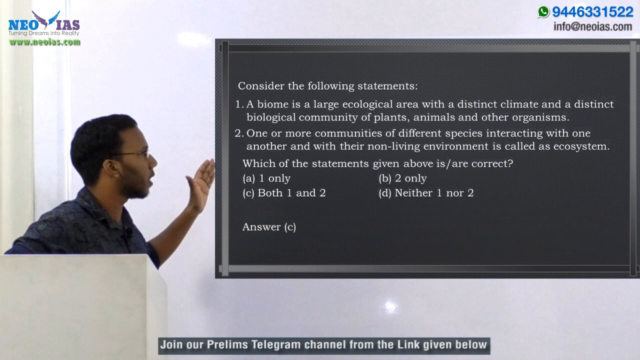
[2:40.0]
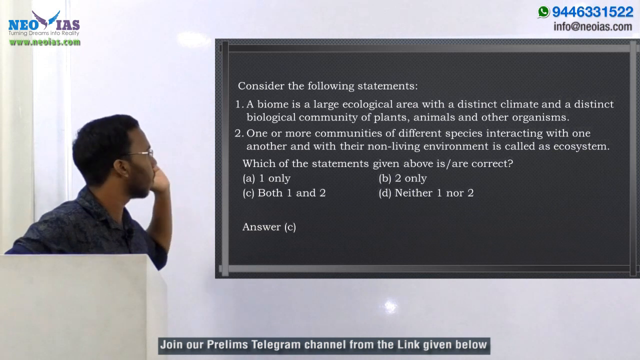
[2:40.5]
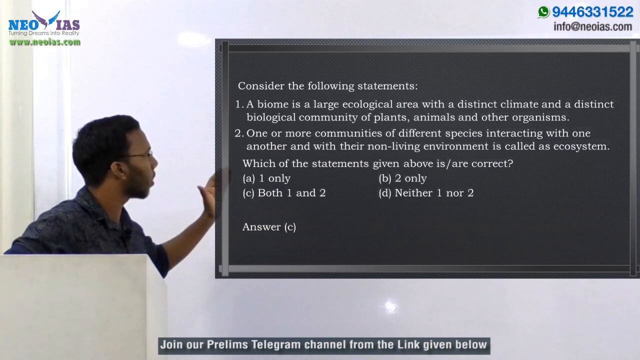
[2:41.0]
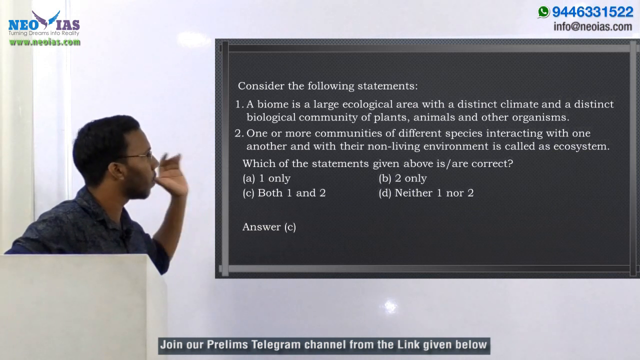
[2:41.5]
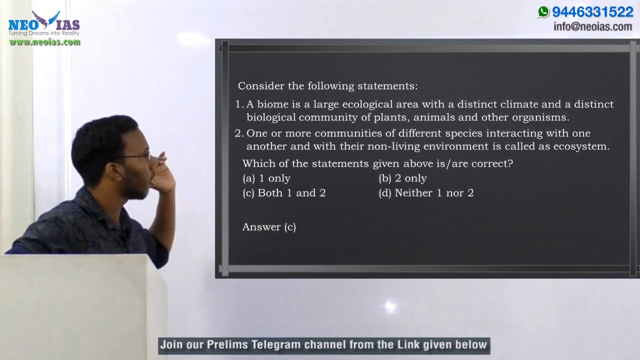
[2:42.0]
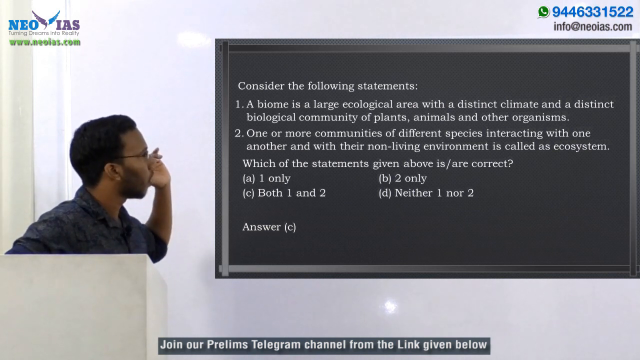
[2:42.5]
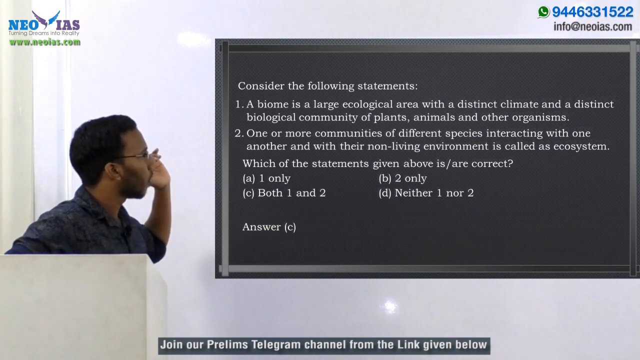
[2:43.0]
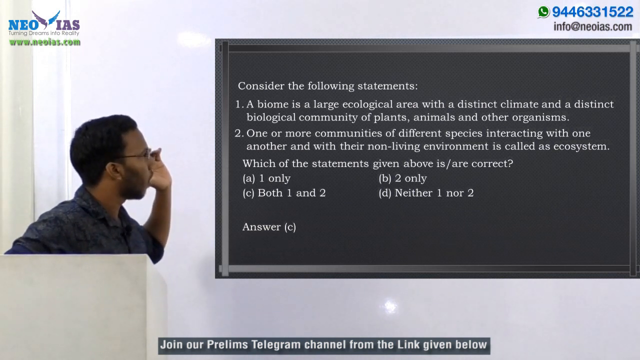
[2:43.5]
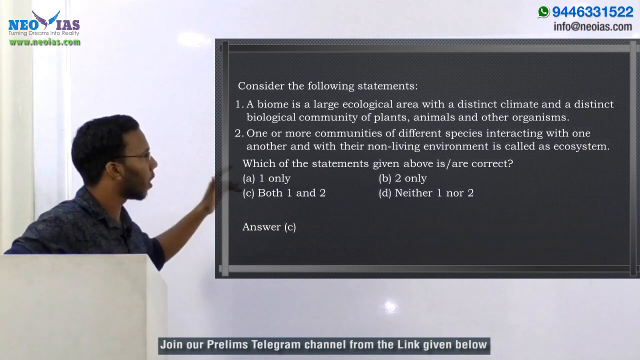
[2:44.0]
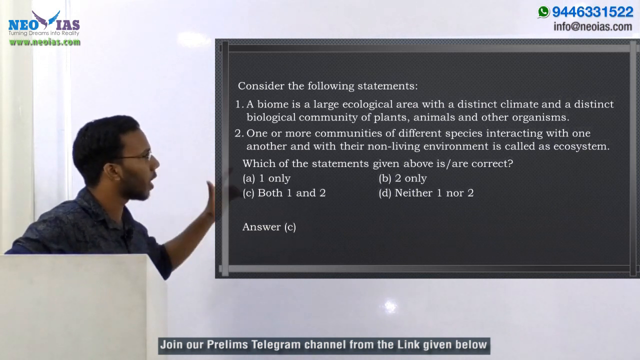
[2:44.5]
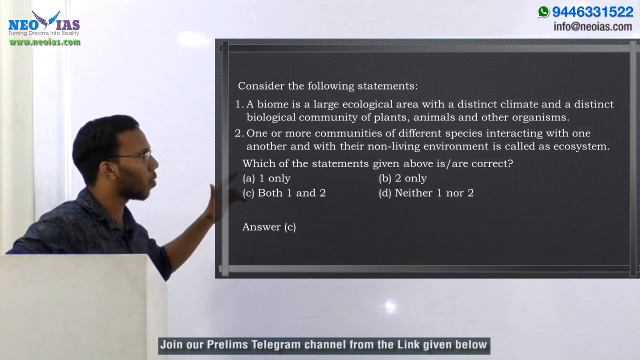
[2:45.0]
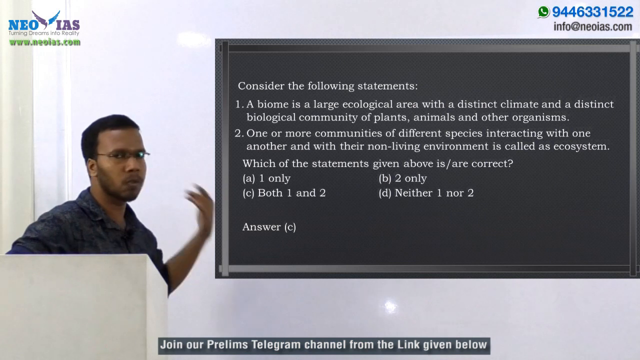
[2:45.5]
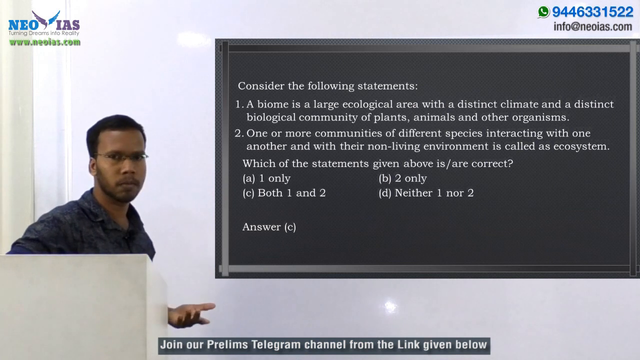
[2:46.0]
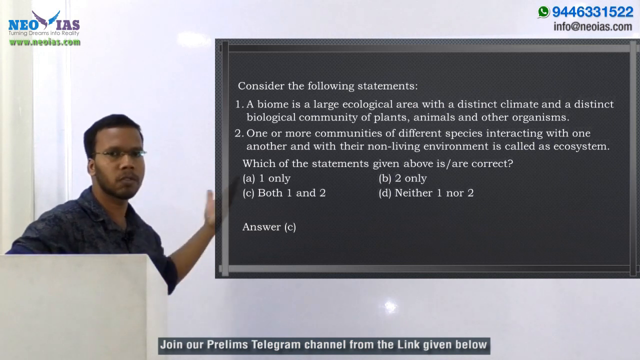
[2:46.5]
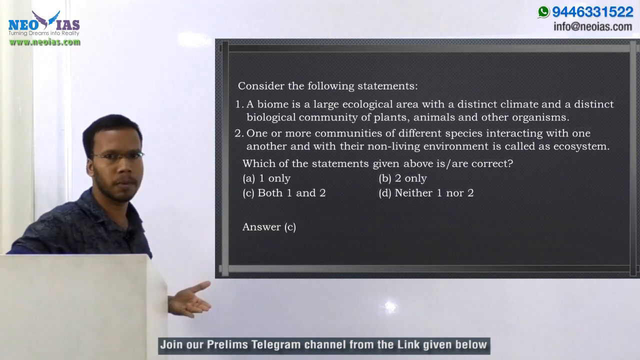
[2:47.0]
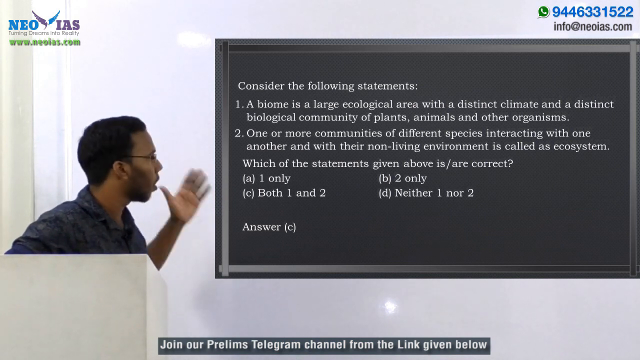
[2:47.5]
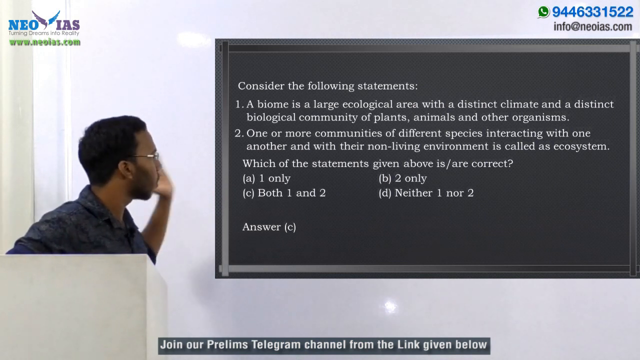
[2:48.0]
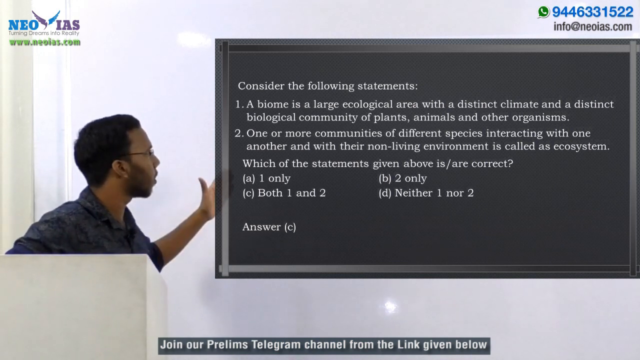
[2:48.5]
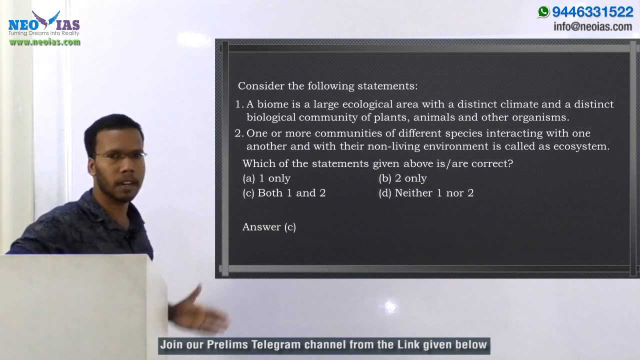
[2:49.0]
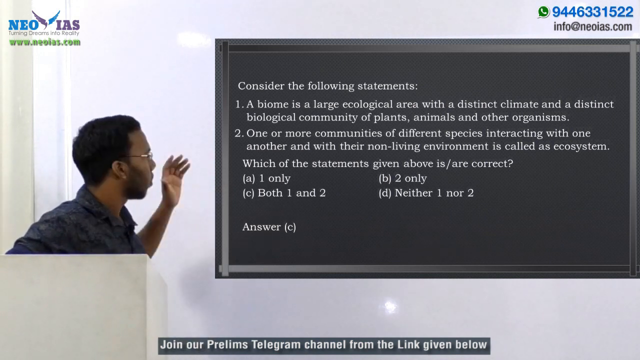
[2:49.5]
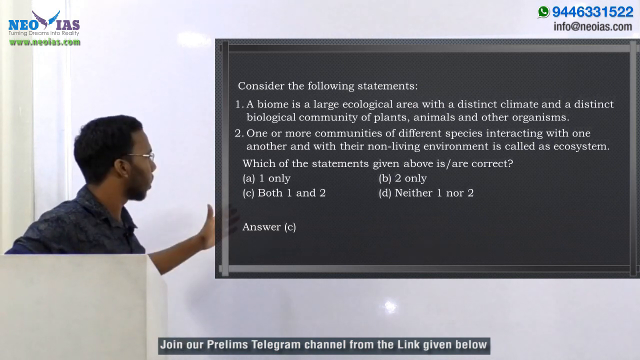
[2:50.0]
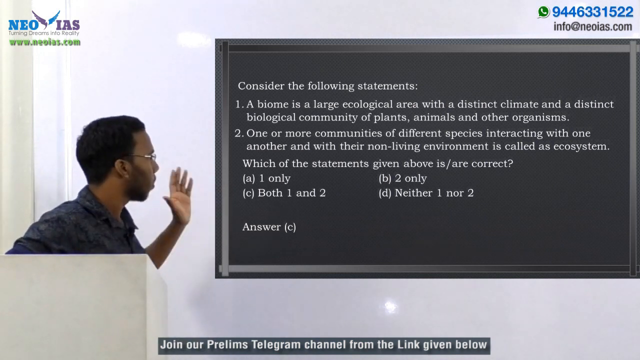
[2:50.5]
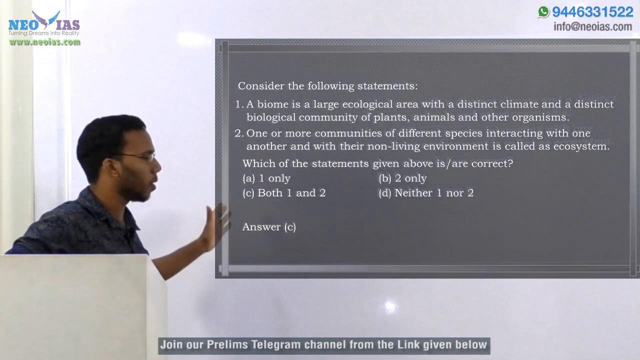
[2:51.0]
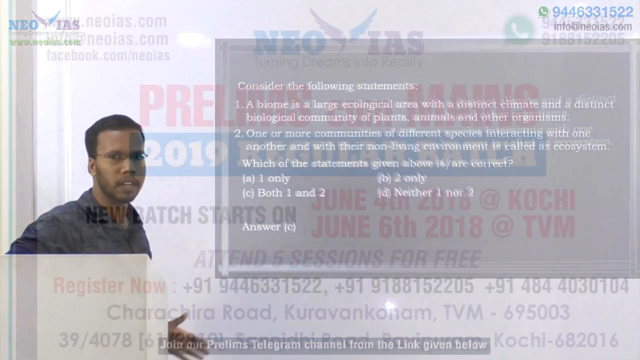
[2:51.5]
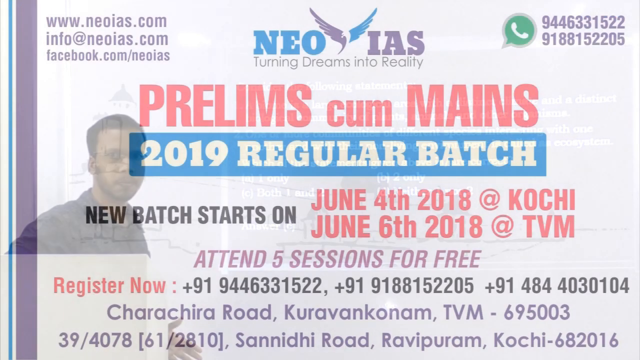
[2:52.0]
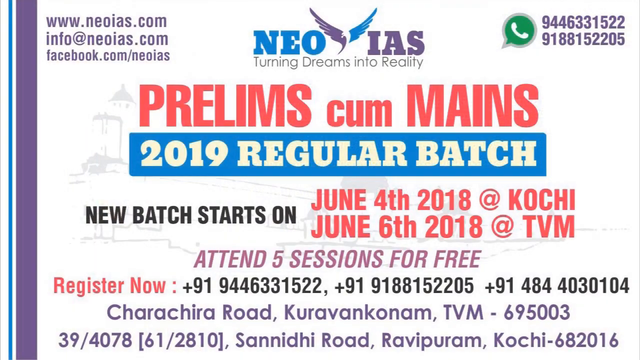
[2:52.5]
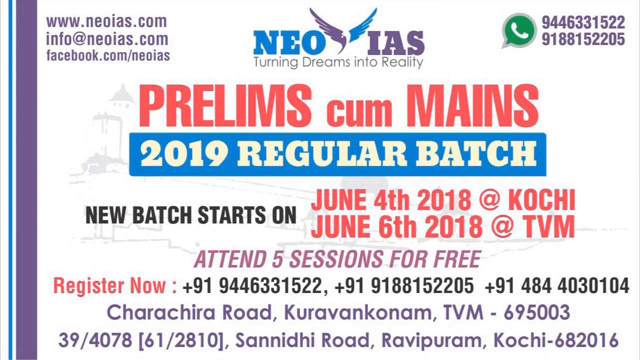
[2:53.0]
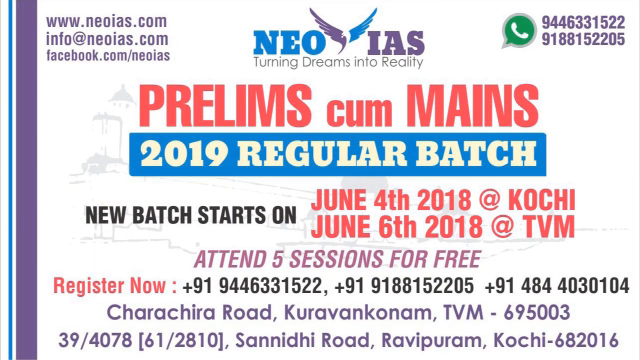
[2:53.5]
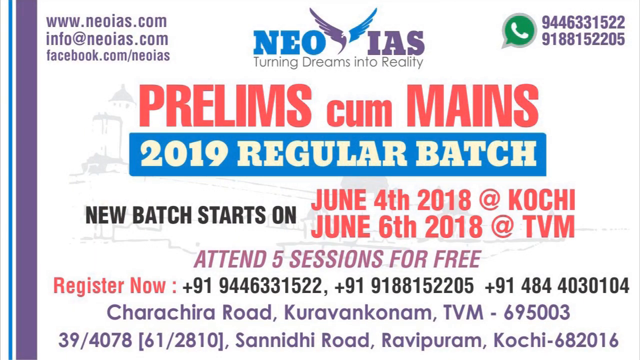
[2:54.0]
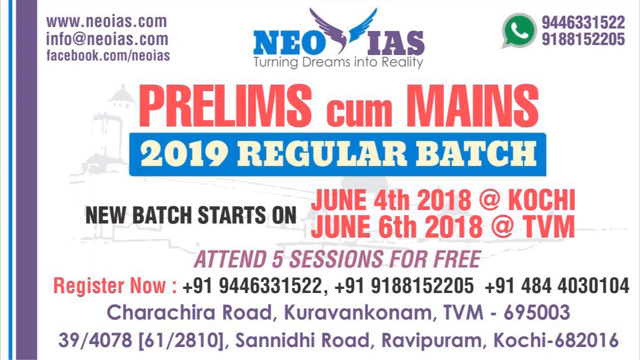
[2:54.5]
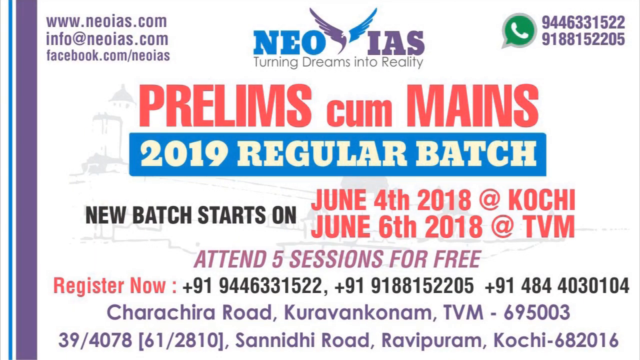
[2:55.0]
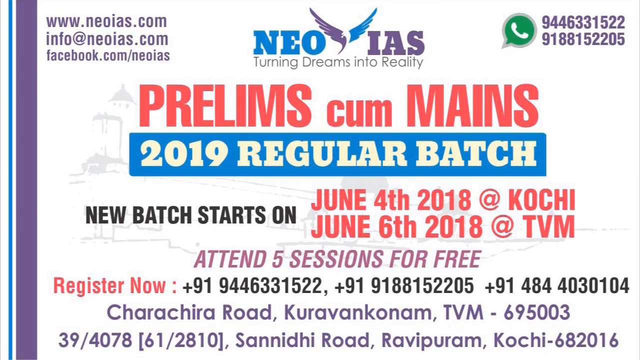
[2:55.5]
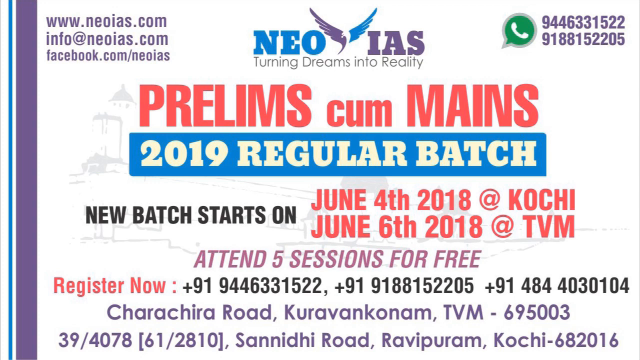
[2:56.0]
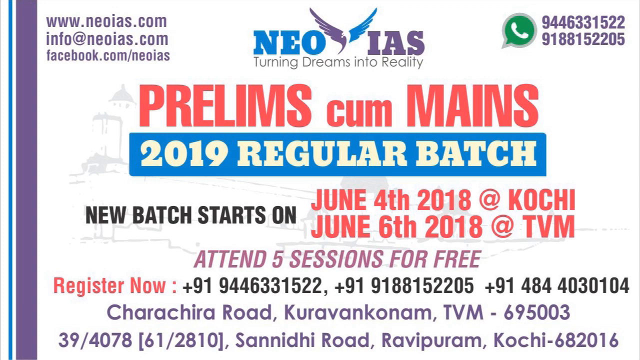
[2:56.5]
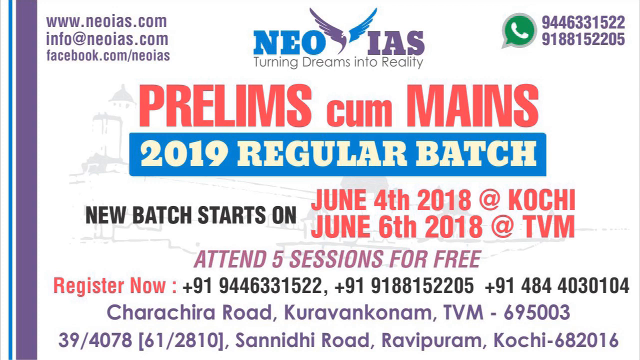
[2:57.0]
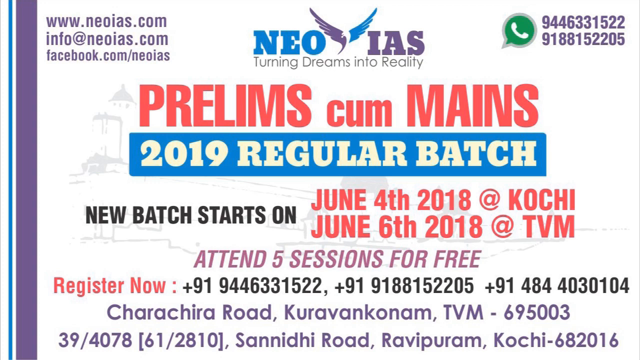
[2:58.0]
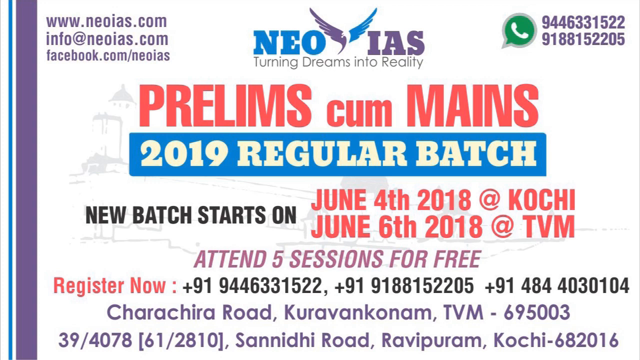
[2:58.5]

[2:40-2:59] The man's head is turned to the left as he looks at the board. His hand disappears behind the board, showing that the board is not really there but is simulated on the computer and laid over his arm. He gestures and looks toward the audience for a moment. The shot then fades completely to a white screen full of information: purple websites at the top left, two phone numbers at the top right, and the logo at the top center. Below that, in red, is text mentioning "prelims" and "mains," followed by a blue box with beige text reading "2019 regular batch." It says new batches start on June 4th at Kochi and June 6 for TVM, and that five sessions are free. There is also registration information, three phone numbers at the bottom, and the address of the location. Apart from this, the screen is white, with the faint temples or buildings seen at the start visible behind the text.